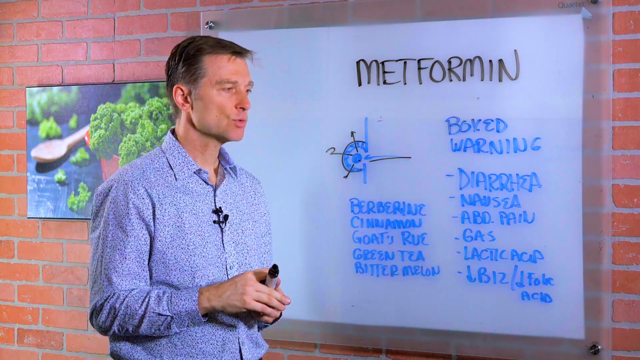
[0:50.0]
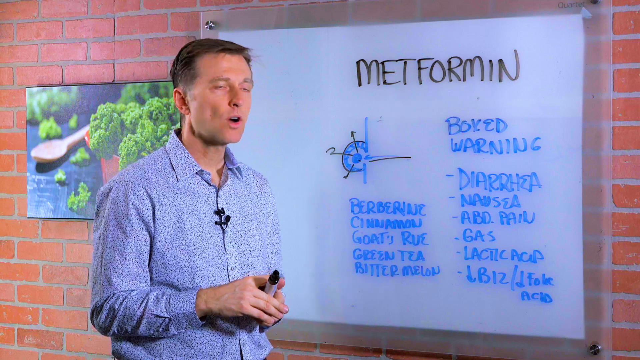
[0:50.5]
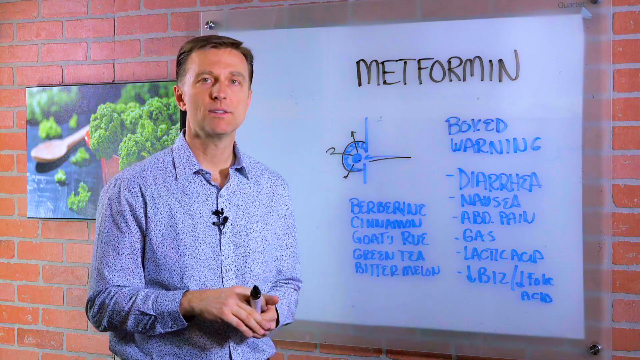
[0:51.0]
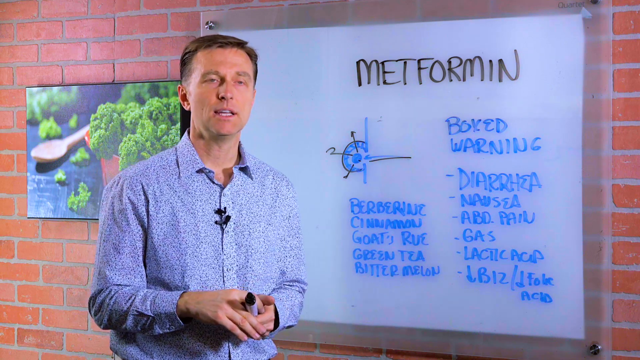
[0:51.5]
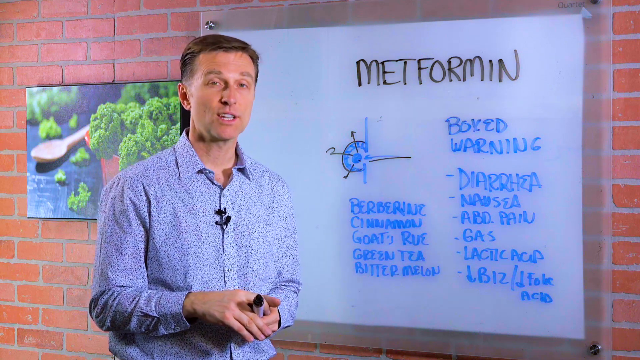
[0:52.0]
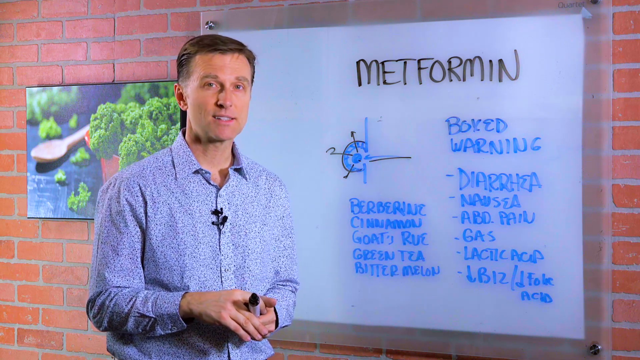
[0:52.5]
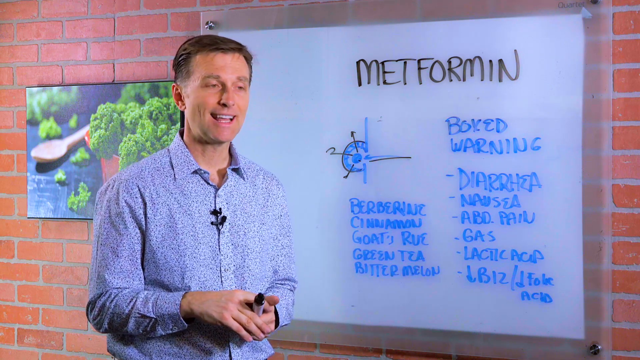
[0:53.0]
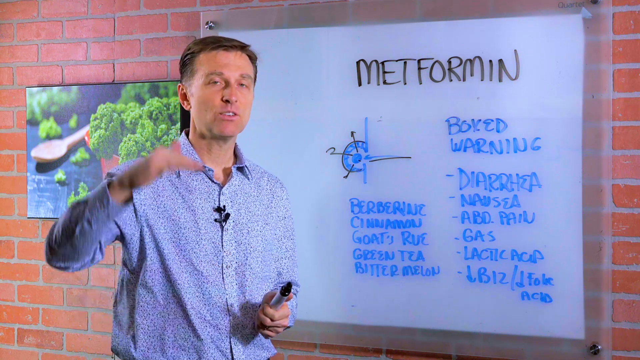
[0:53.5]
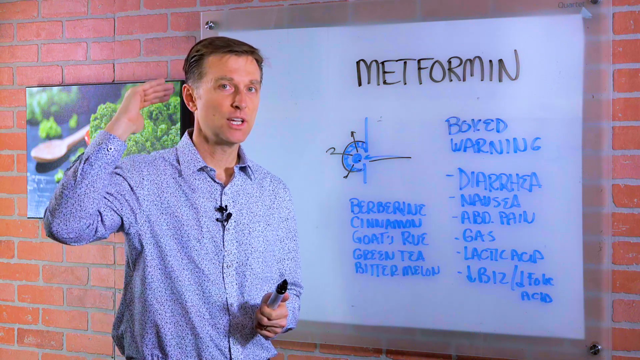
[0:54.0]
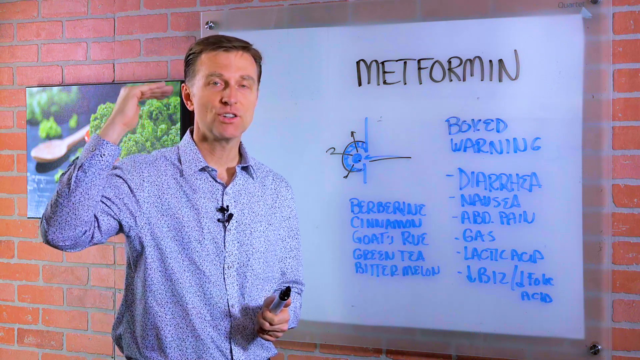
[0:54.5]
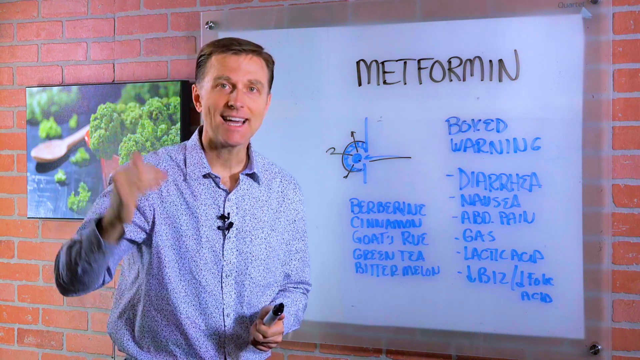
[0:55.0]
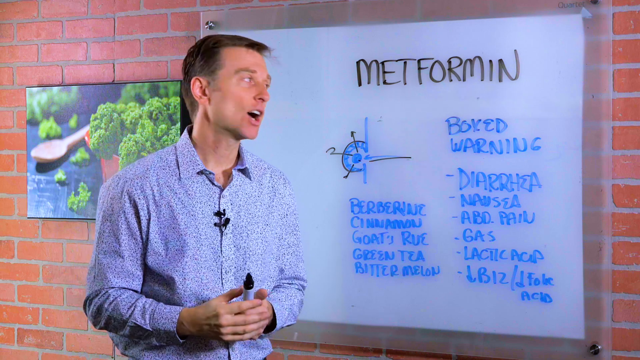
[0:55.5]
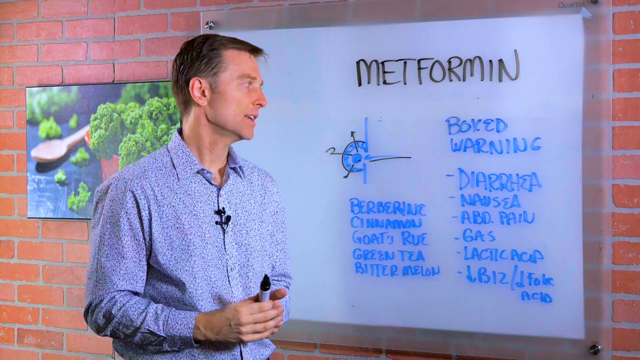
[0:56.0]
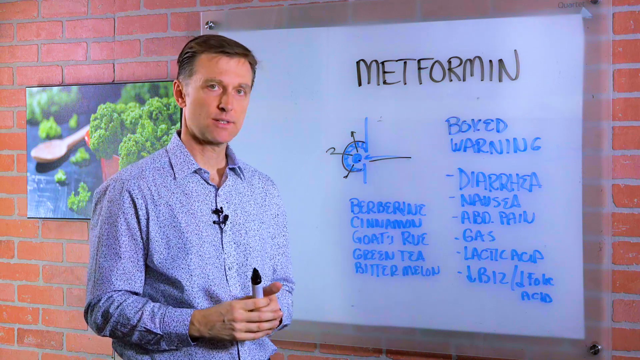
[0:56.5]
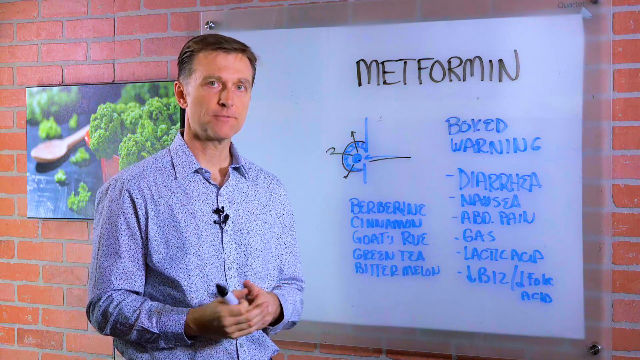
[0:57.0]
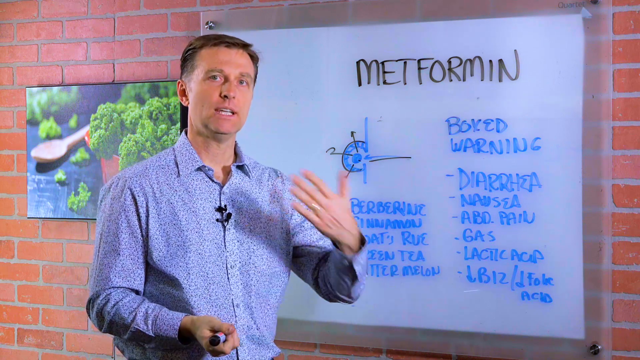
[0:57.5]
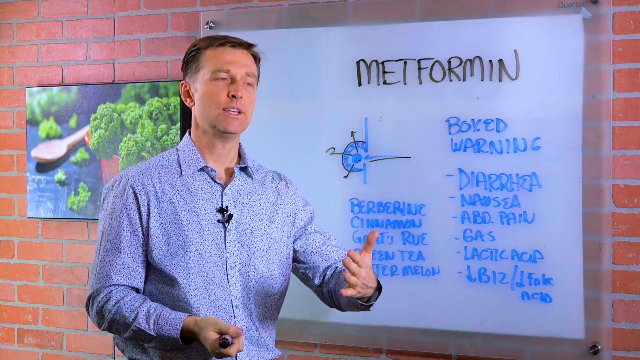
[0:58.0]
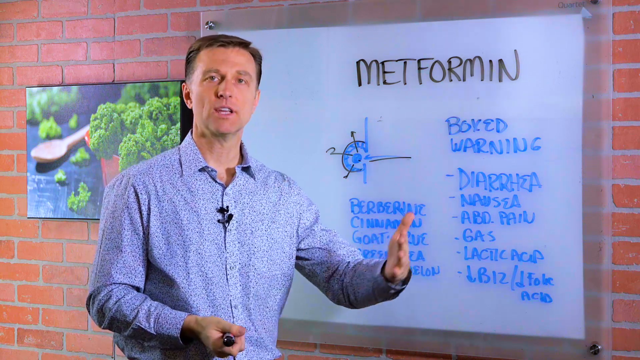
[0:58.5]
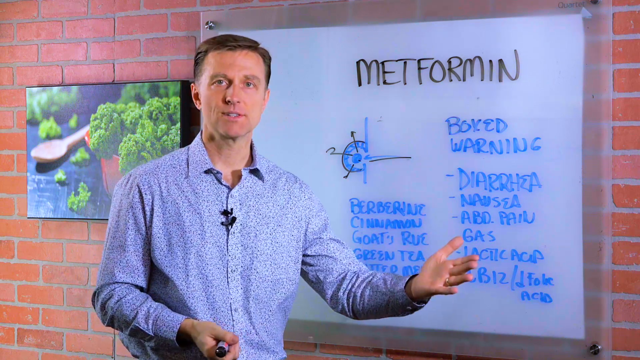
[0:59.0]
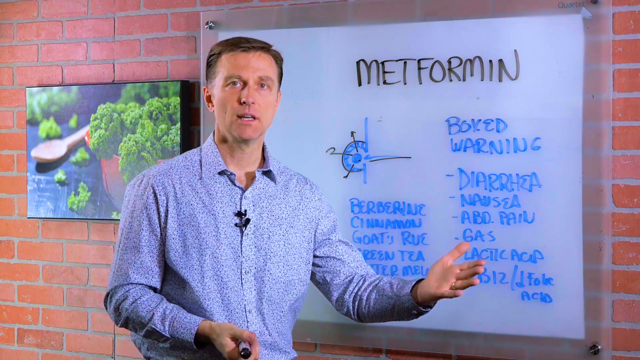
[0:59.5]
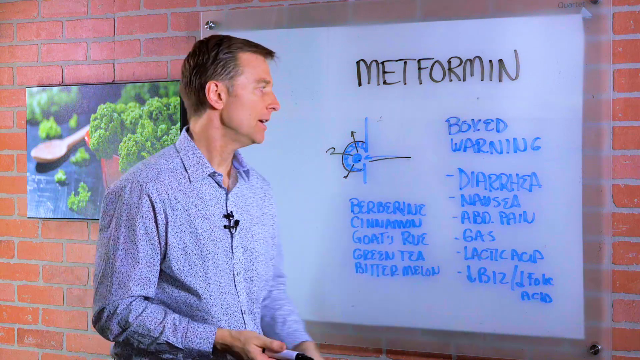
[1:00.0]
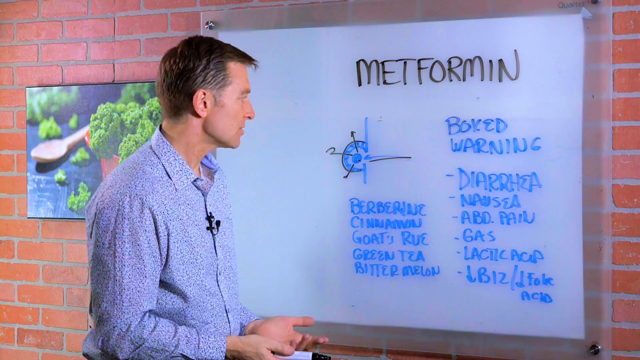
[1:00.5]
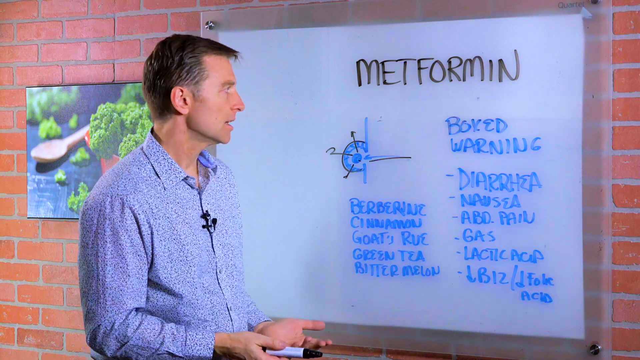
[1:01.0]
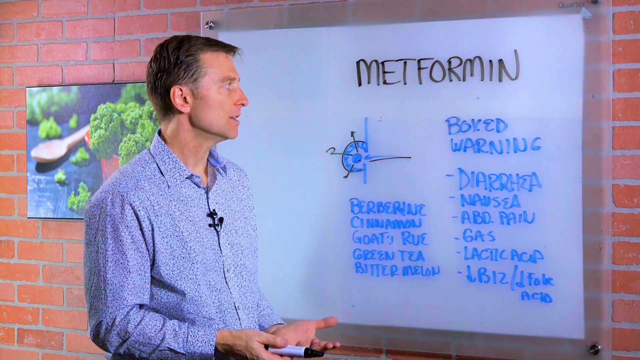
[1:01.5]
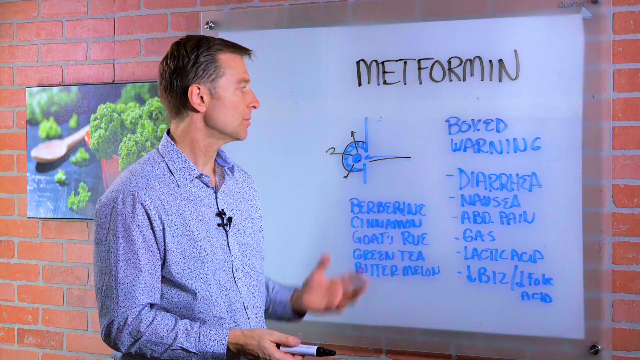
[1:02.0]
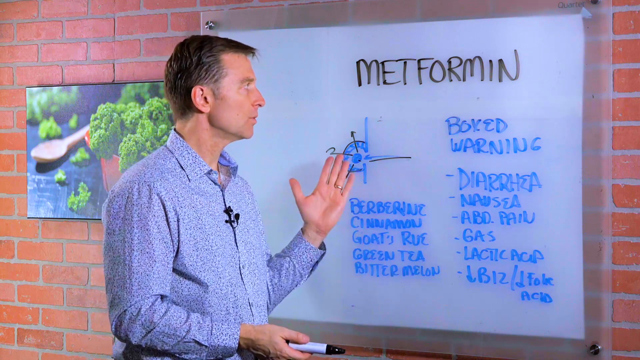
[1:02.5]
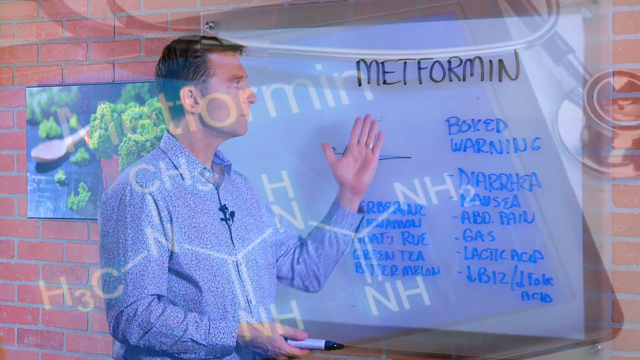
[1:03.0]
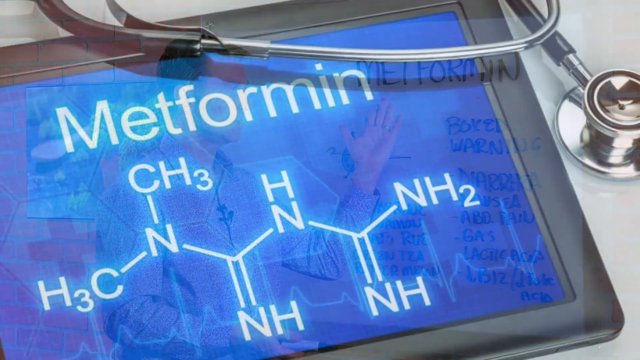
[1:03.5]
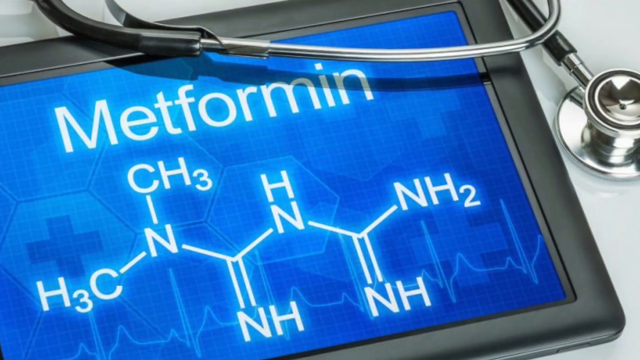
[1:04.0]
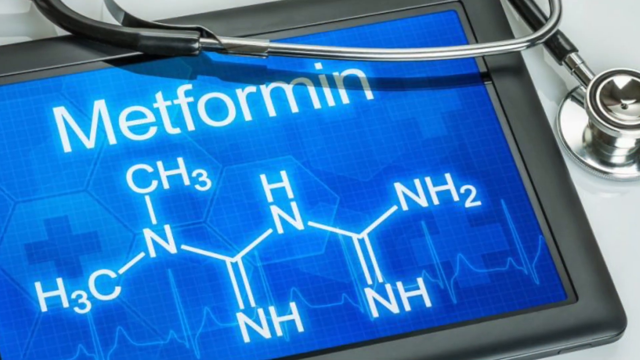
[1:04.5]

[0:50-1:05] The man points at the portion he has drawn over the original diagram, raising and lowering his hands toward the camera as though giving examples. He turns back toward the board and points at different portions of the left-hand column, which read "berberine, cinnamon, goat's rue, green tea, and bitter melon." He then fully turns toward the camera and points at the diagram he has made while looking at the second row of blue text, which reads "boxed warning, diarrhea, nausea, abdominal pain, gas, lactic acid, B12/folic acid," with downward arrows. He points and gestures at both sides of the whiteboard. The camera pulls out and turns a bit, and the video moves to a stock photo of a diagram of a scientific formula that reads "metformin" at the top. It is on some sort of tablet on a white background, with a stethoscope in the upper right-hand portion of the photo.